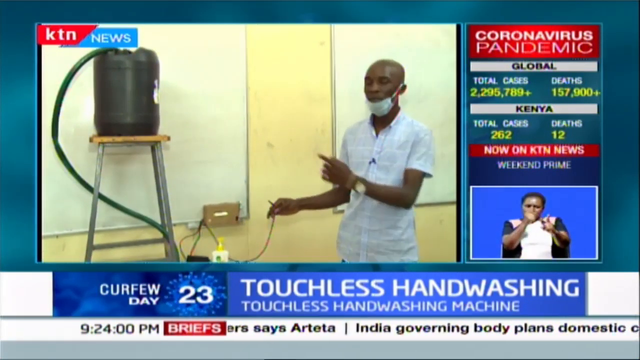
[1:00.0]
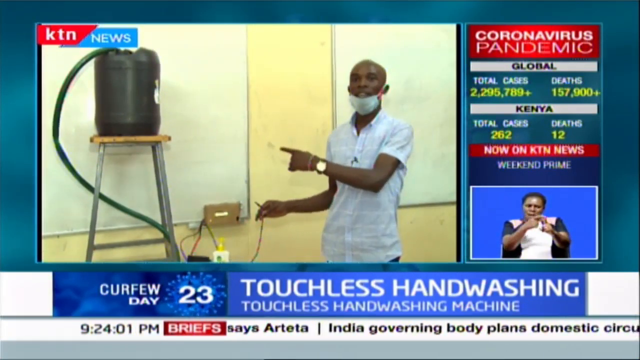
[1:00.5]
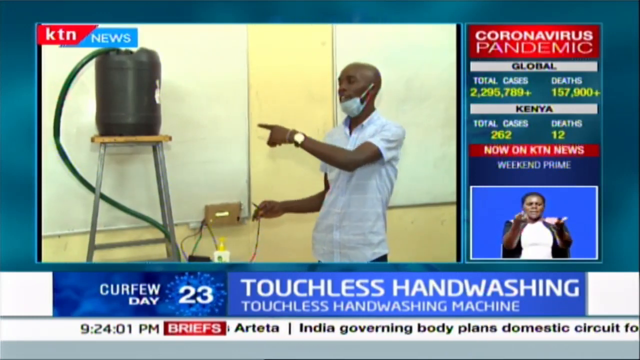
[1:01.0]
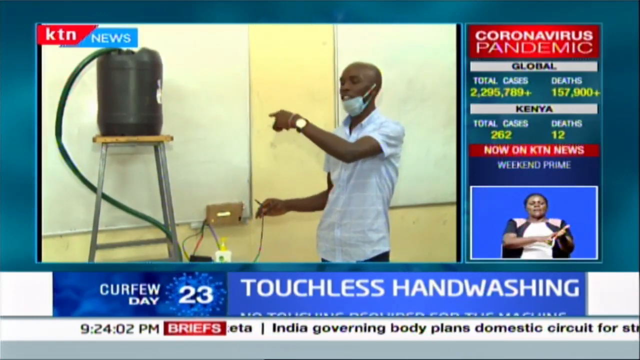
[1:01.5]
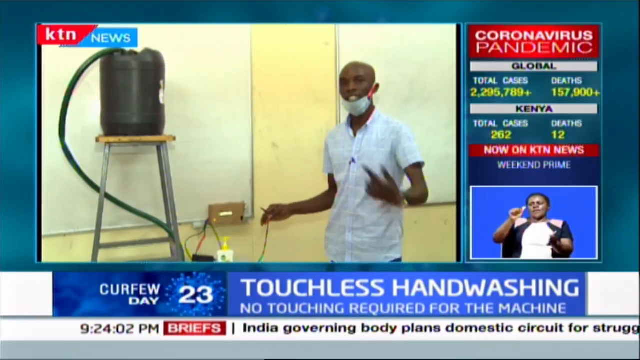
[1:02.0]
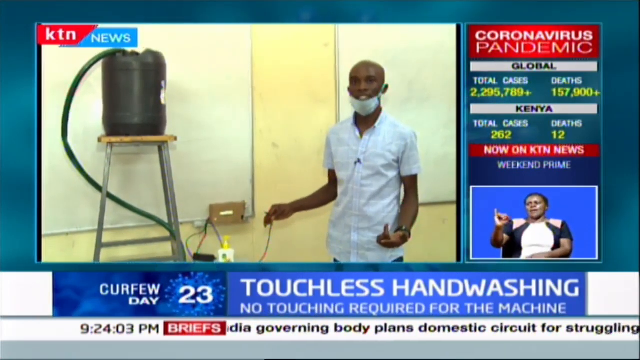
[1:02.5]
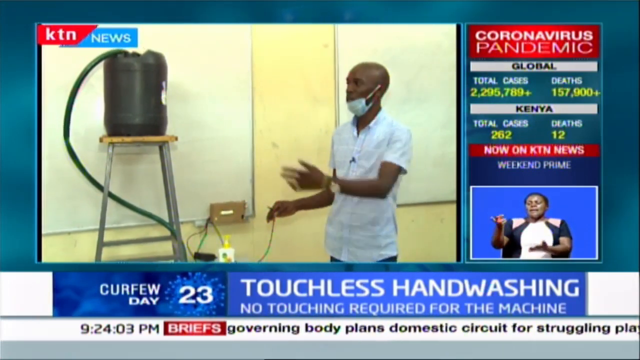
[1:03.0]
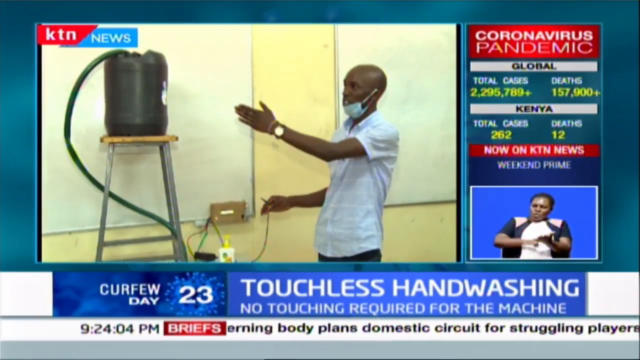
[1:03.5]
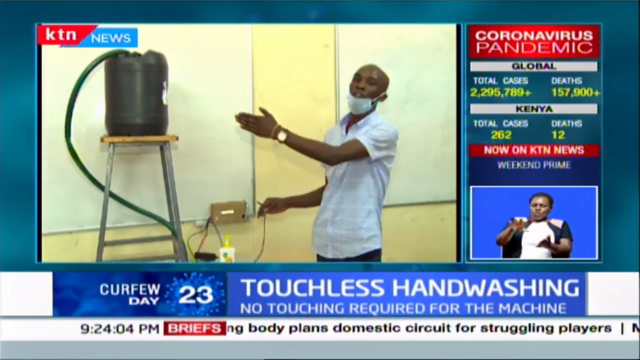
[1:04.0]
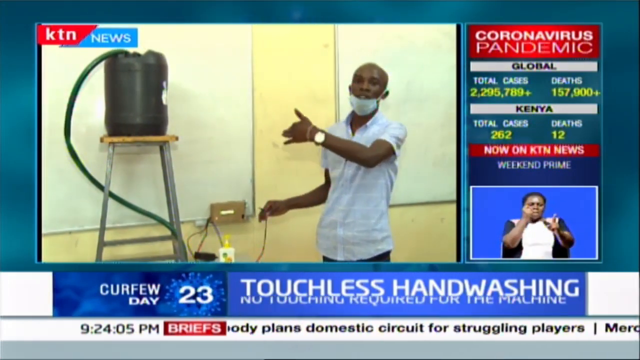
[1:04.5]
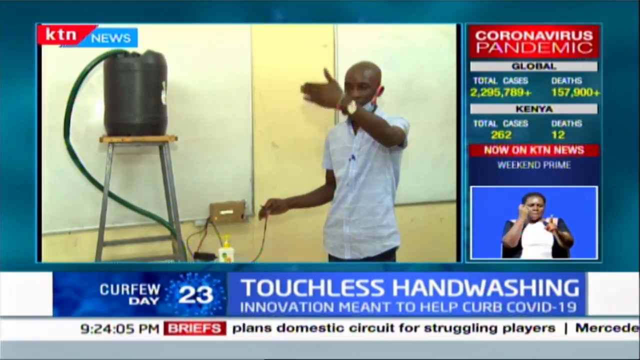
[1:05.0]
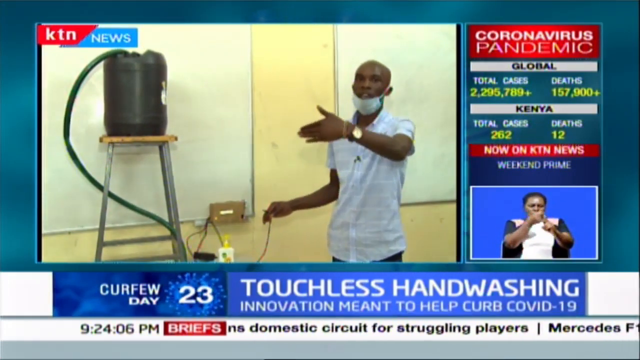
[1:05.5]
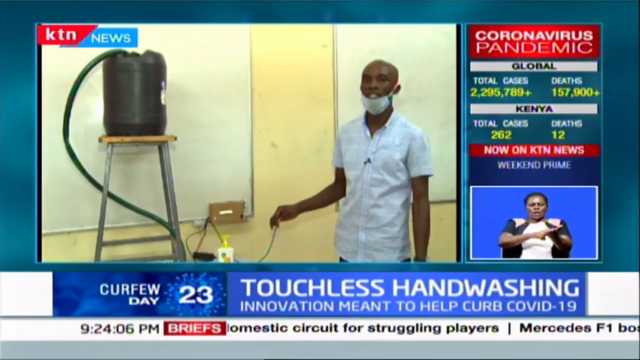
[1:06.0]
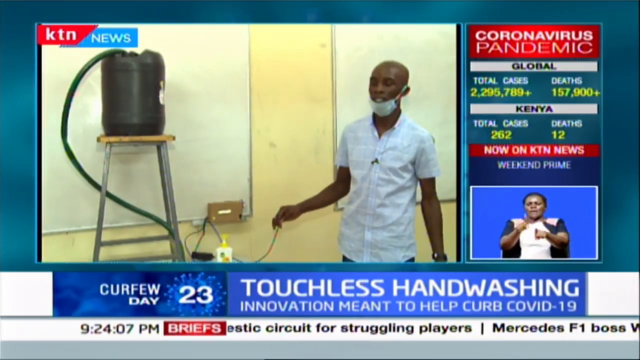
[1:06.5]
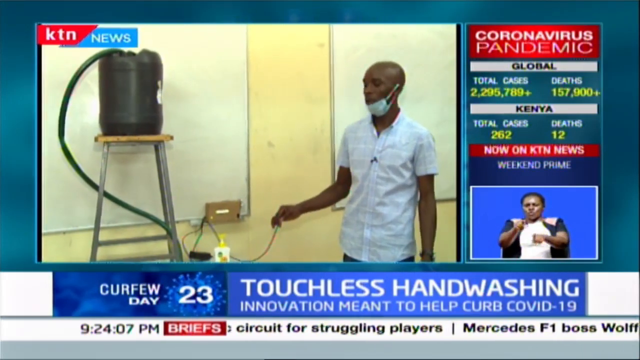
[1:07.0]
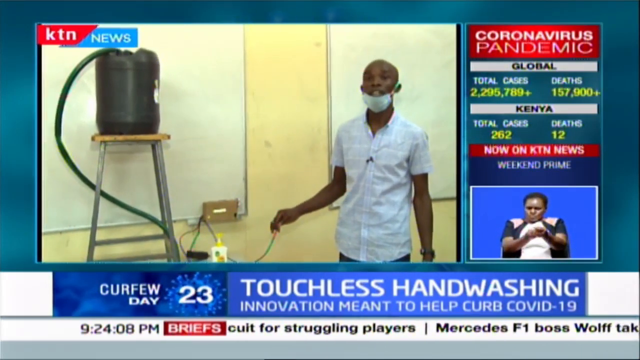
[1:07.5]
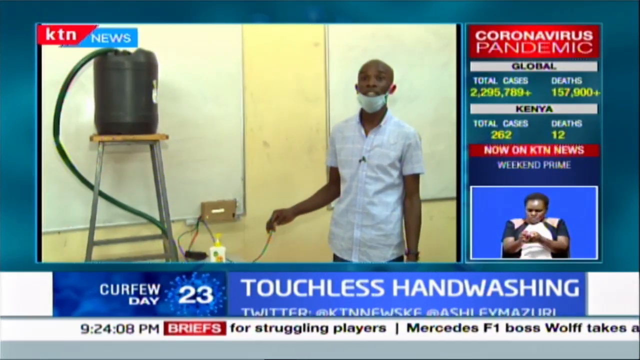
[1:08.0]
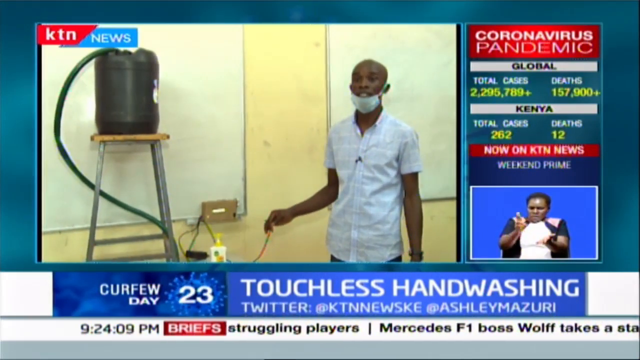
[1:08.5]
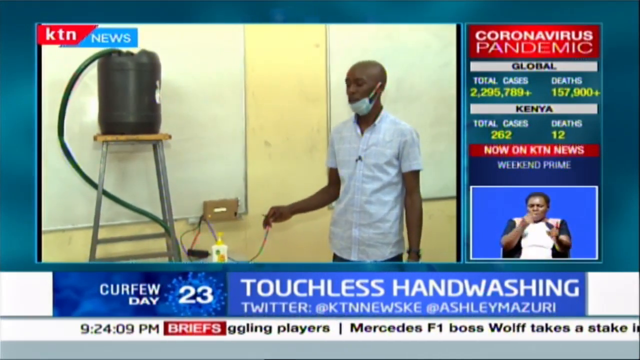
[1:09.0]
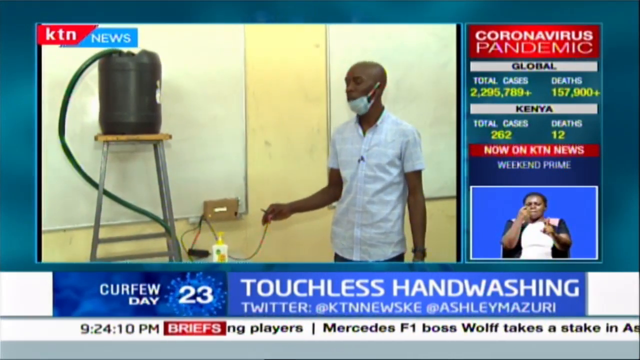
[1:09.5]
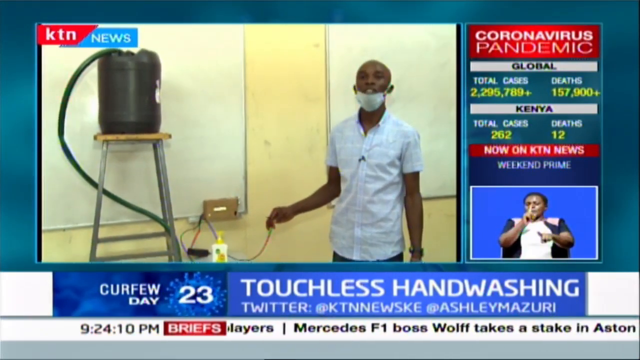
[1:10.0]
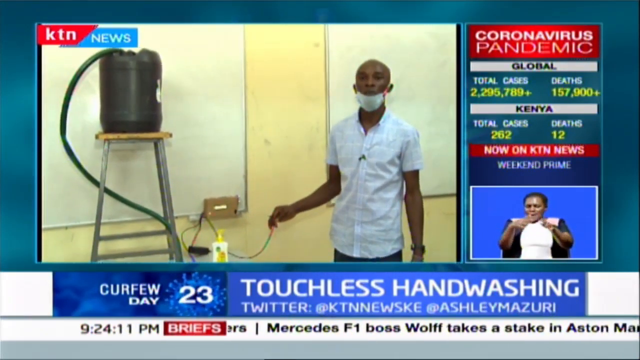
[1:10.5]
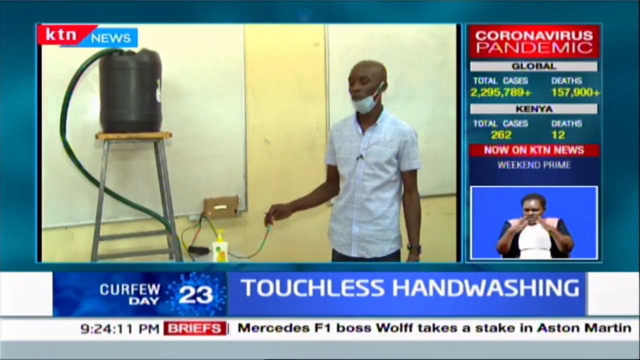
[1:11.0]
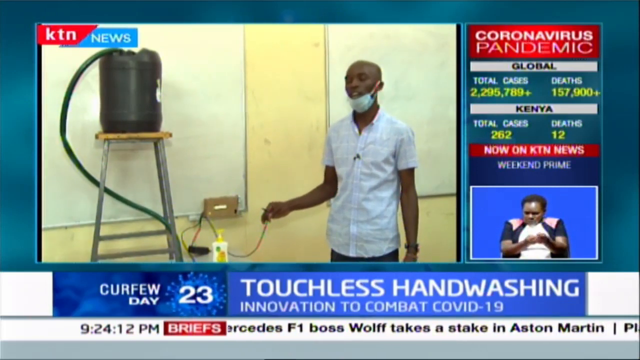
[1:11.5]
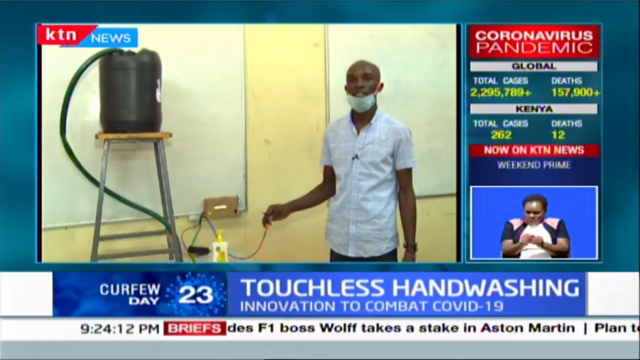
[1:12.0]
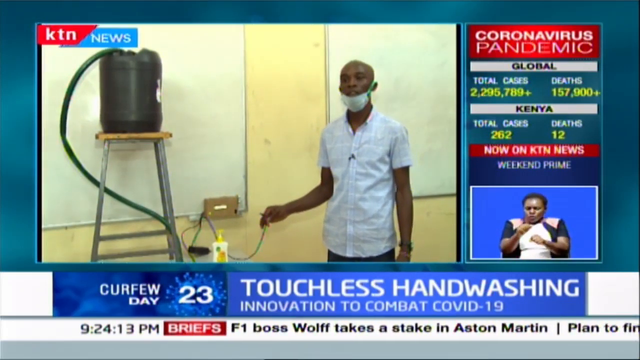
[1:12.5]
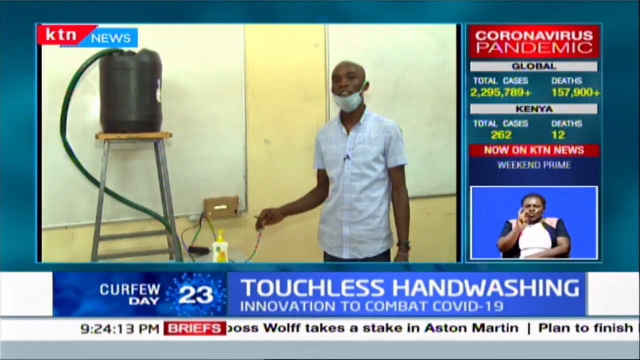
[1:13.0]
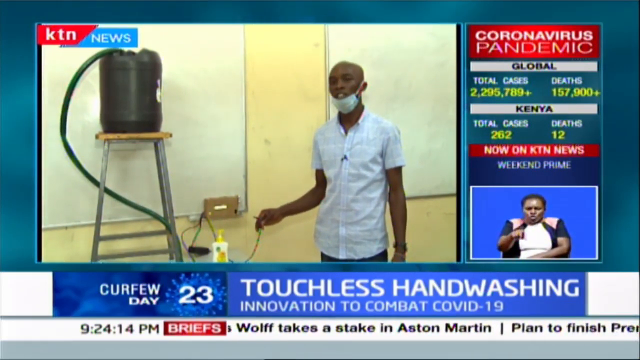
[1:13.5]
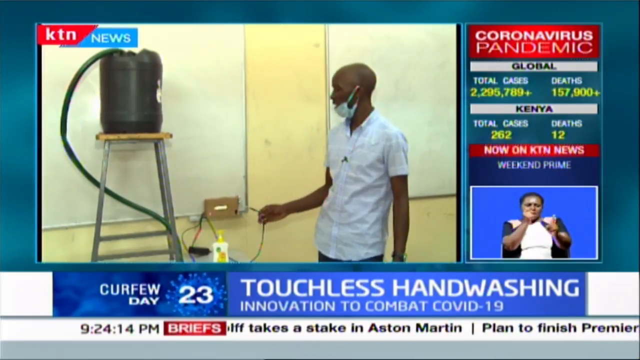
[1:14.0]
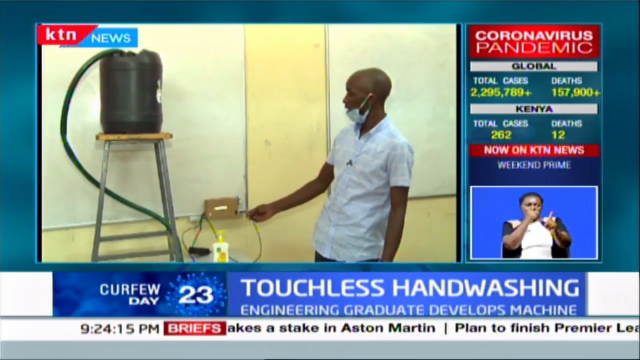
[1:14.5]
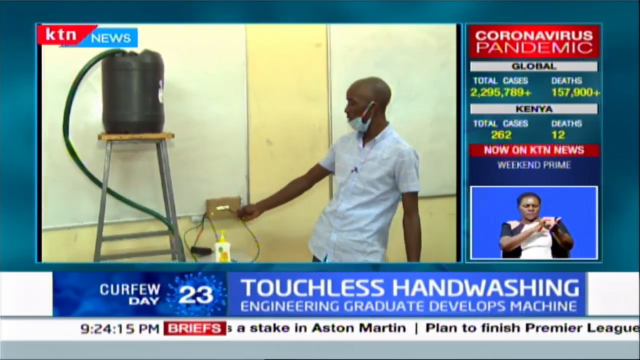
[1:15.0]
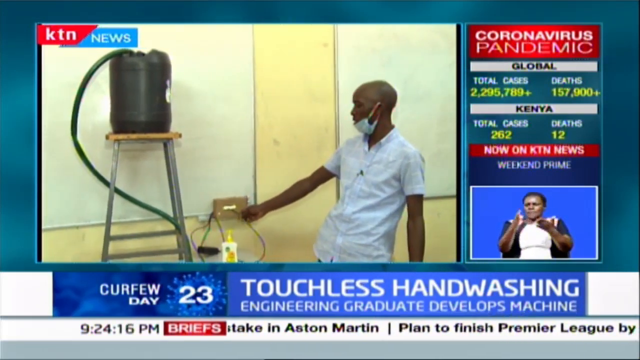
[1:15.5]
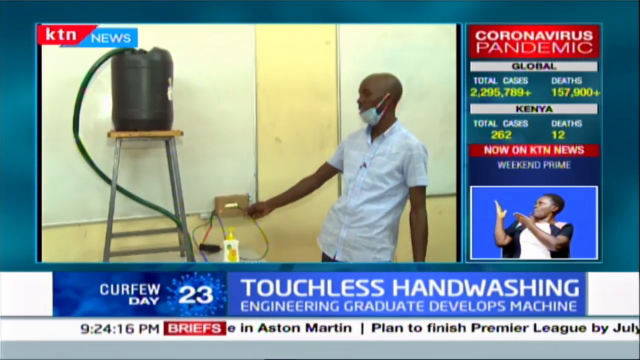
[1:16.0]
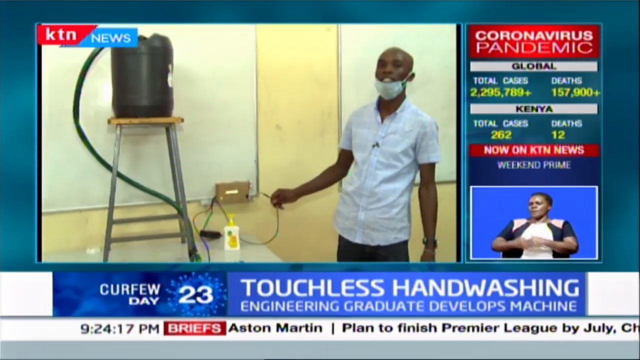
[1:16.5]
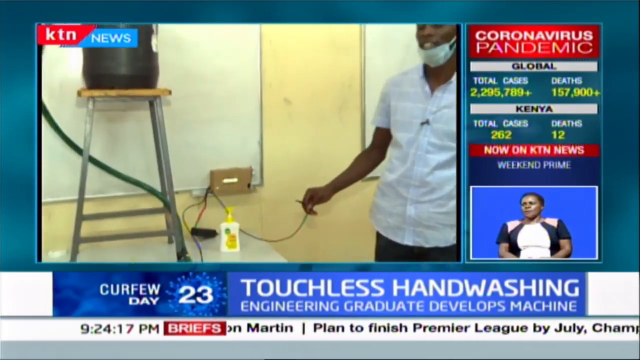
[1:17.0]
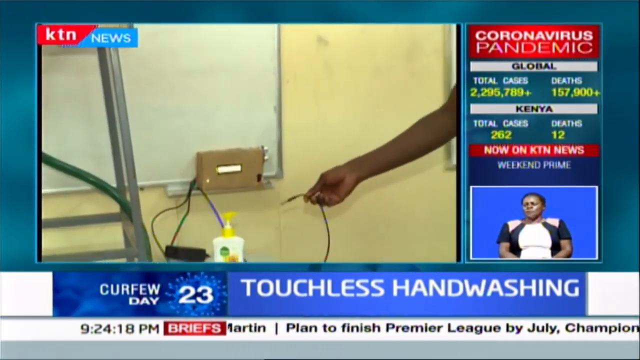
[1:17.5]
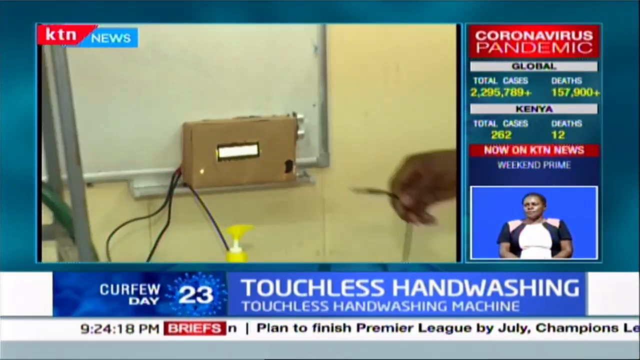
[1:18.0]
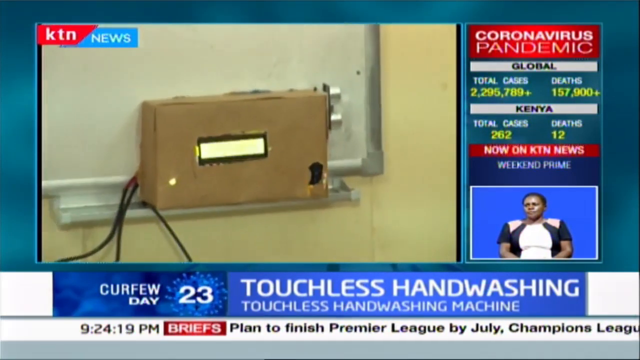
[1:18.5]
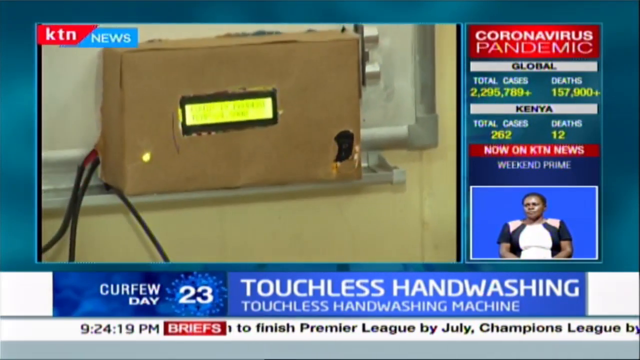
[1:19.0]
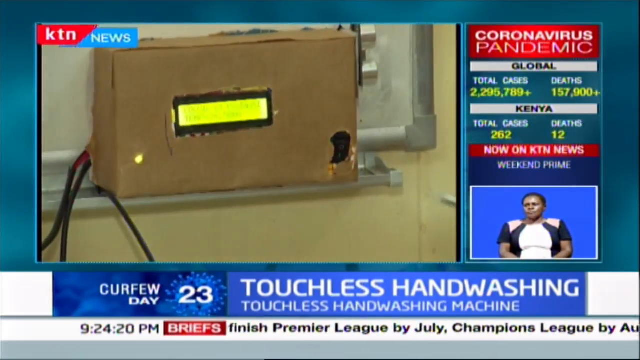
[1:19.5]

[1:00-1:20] In the KTN News broadcast, a man in the middle of the screen has a water tank set up with a green hose coming out of it to distribute the water. There is also a little electrical box that looks mounted to the wall, with an LED screen on the front of it. He is explaining how the water system works. There appears to be some soap on the desk. He is standing in a room with cream-colored walls and dry-erase boards on the right and left sides of the wall, apparently some type of classroom, maybe at a college. The contraption appears to be some type of water filtration system for keeping hands clean during the COVID-19 pandemic.